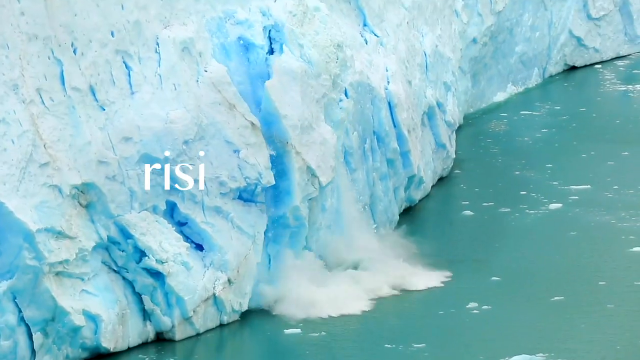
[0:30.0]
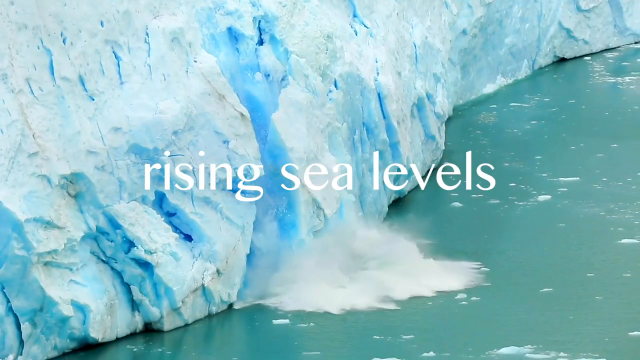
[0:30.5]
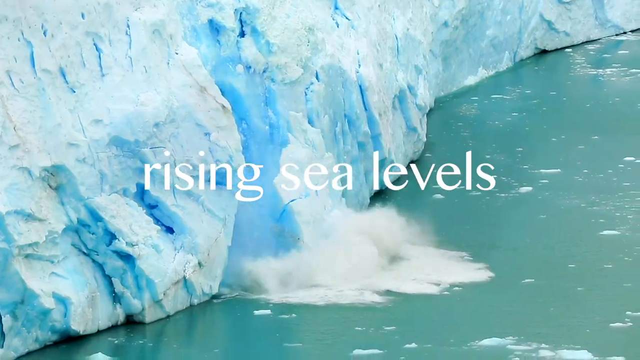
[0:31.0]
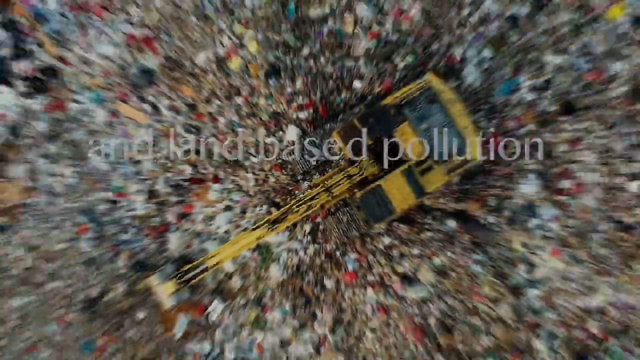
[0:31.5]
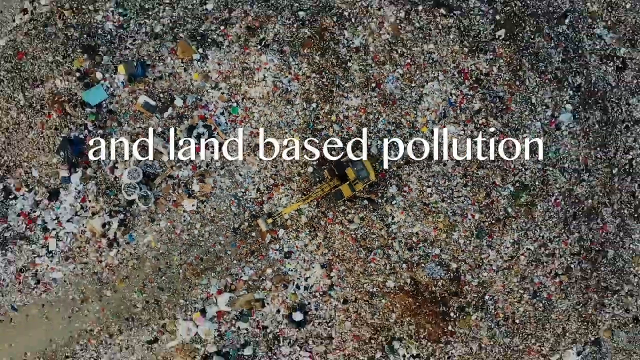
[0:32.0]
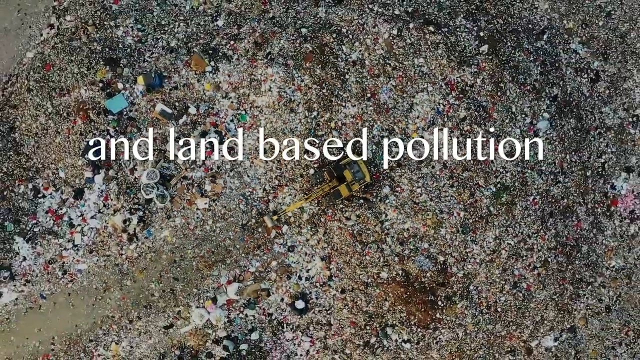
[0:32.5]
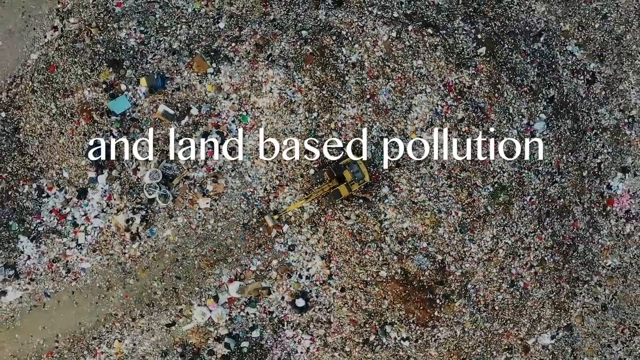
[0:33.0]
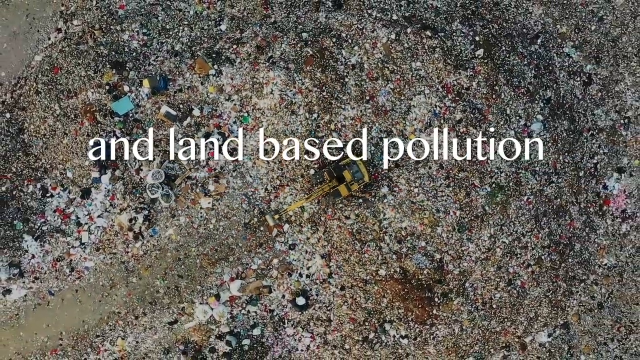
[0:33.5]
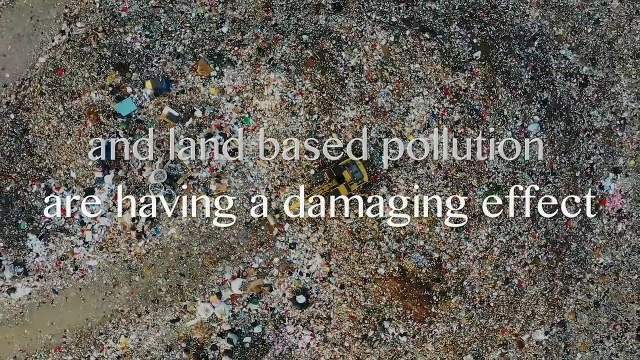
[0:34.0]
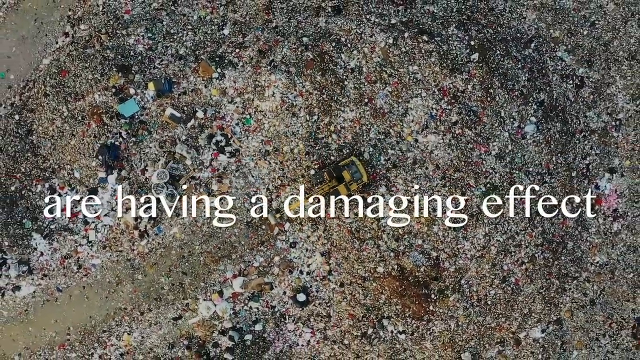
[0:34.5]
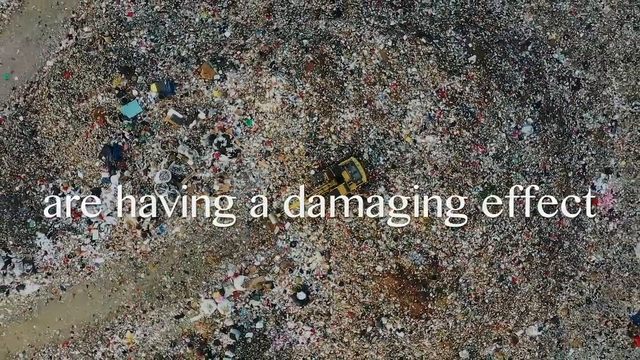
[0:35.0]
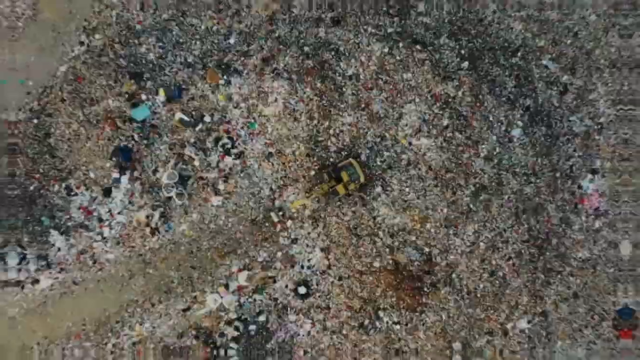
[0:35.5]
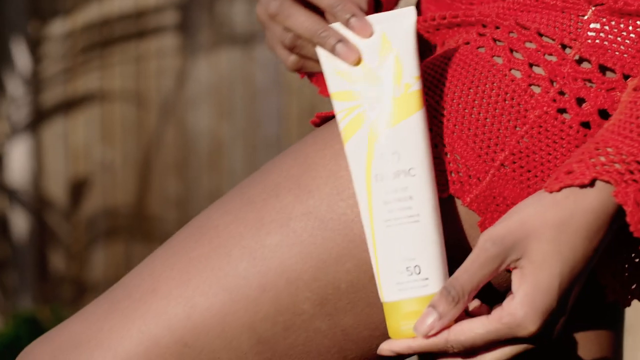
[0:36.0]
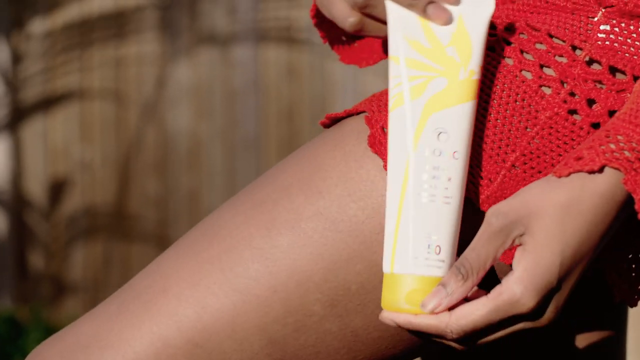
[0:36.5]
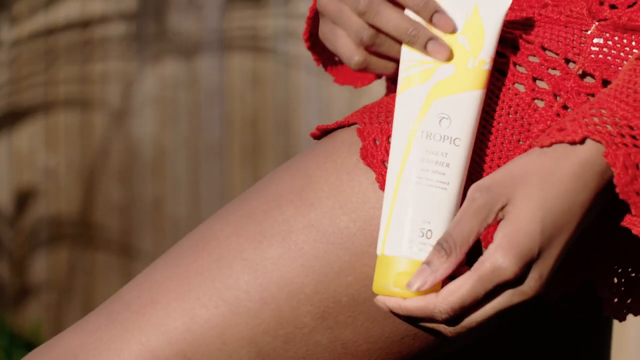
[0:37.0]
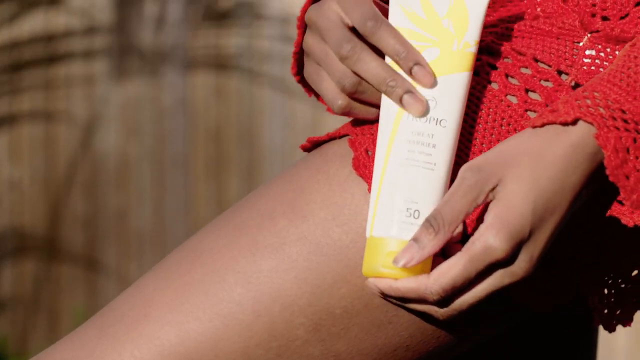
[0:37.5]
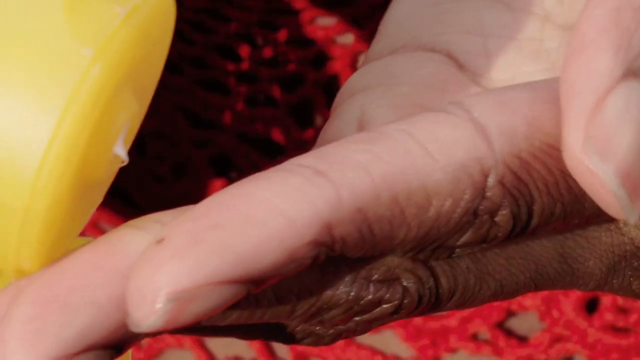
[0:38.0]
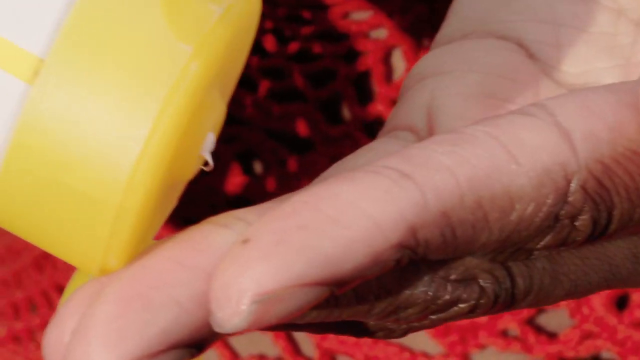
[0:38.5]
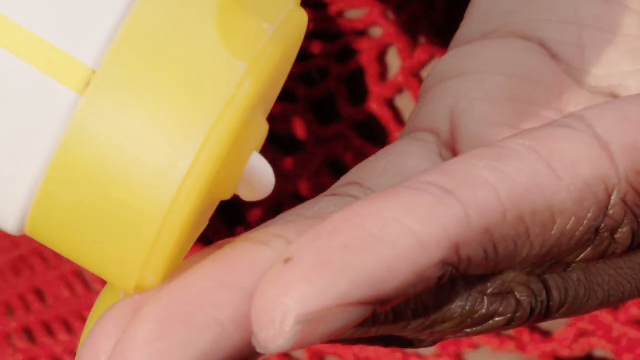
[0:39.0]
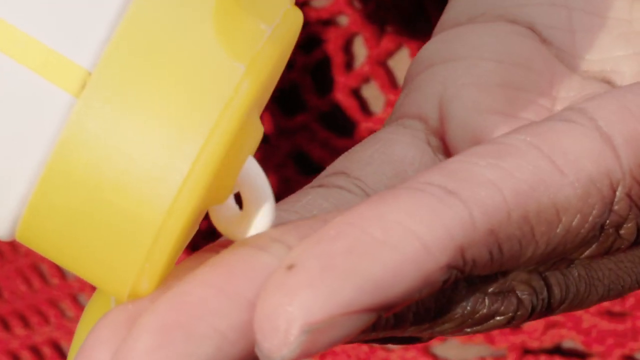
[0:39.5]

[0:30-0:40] A close-up shows what appears to be an iceberg in frozen, icy water; the iceberg is on the left side of the screen and stretches to the top right corner. White text appears just as a chunk of the ice breaks off, saying "rising sea levels." The camera zooms out quickly and transitions to an overhead shot of a landfill-type area with lots of trash and garbage, and yellow crane- and bulldozer-type equipment in the center of the screen. White text says "and land-based pollution" as the camera zooms out to reveal the larger area, and then "are having a damaging effect" appears. The area is littered with garbage. The shot then transitions to someone holding a tube of Tropic cream in both hands; they rub their right index and middle fingers from the top down in front of the tube while holding it stable with their left hand.